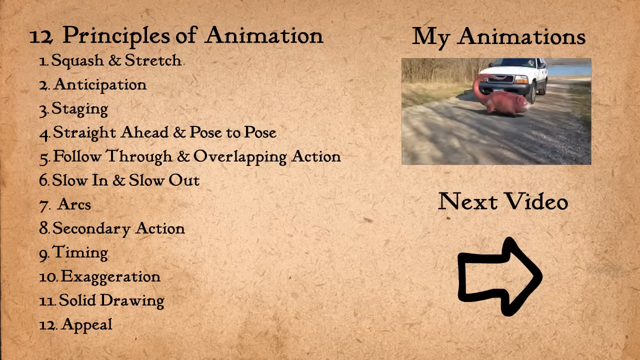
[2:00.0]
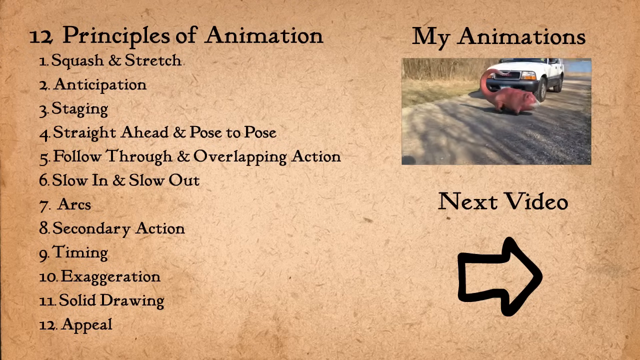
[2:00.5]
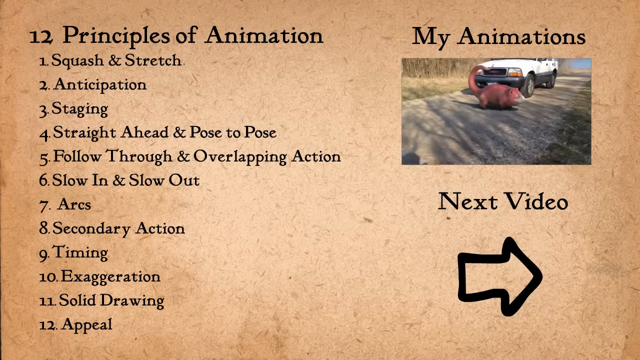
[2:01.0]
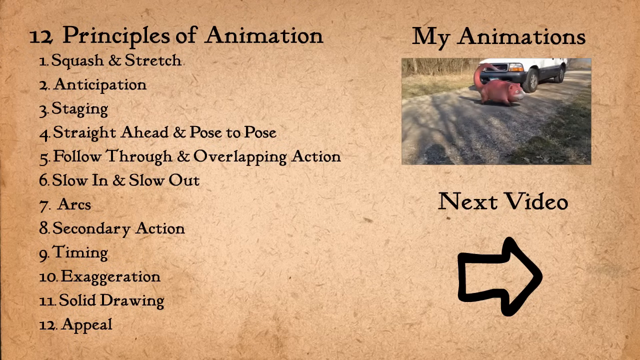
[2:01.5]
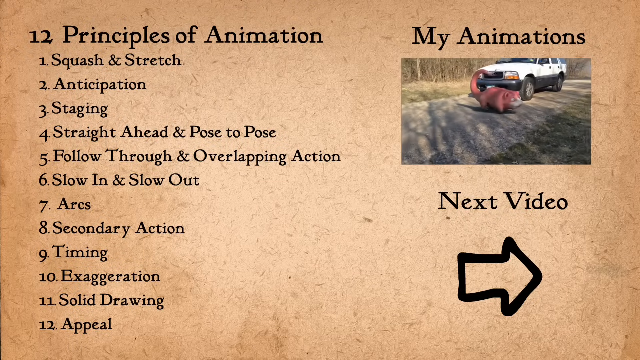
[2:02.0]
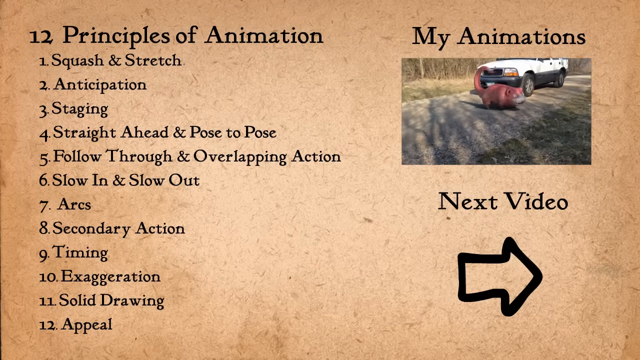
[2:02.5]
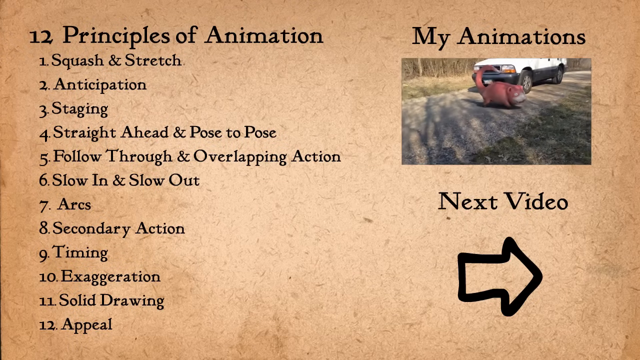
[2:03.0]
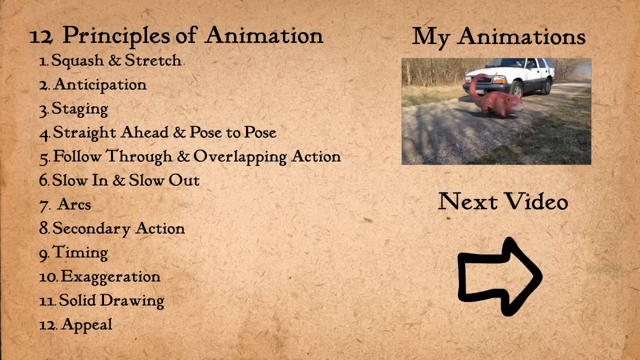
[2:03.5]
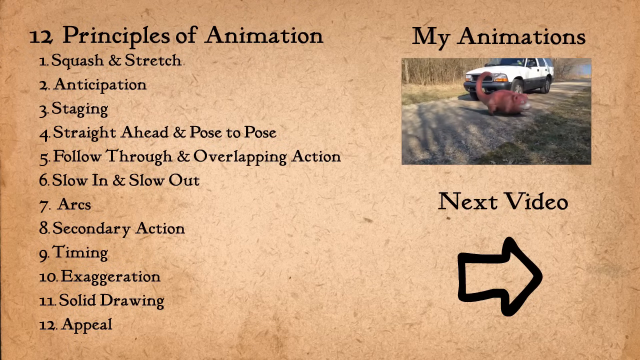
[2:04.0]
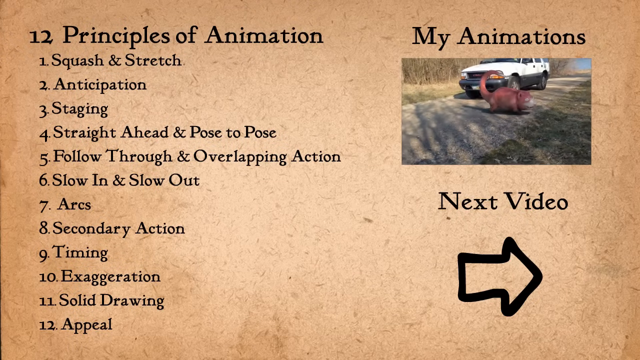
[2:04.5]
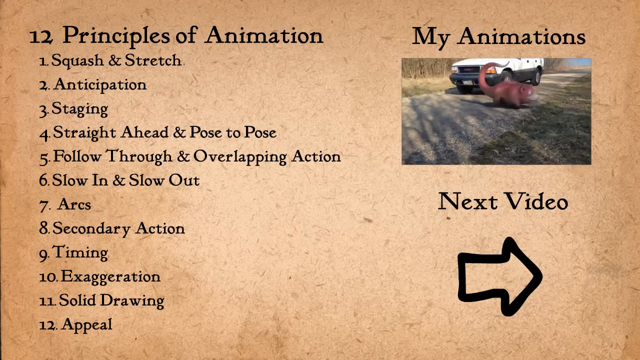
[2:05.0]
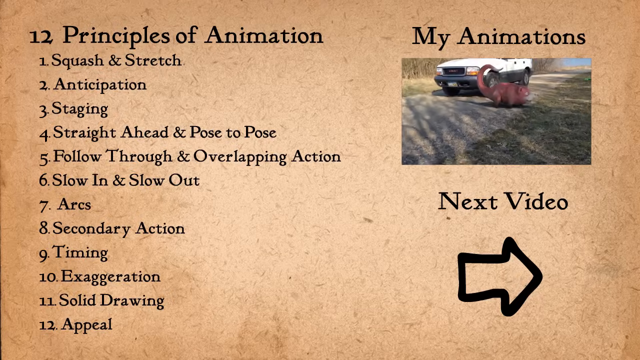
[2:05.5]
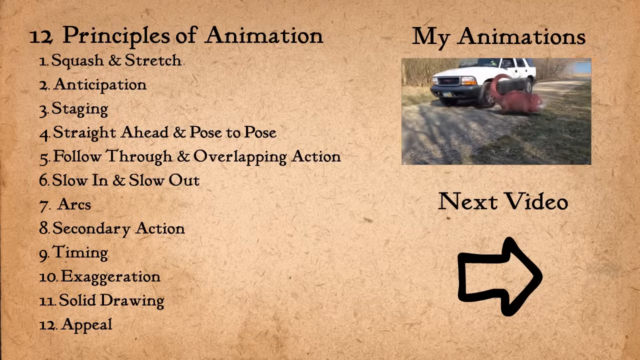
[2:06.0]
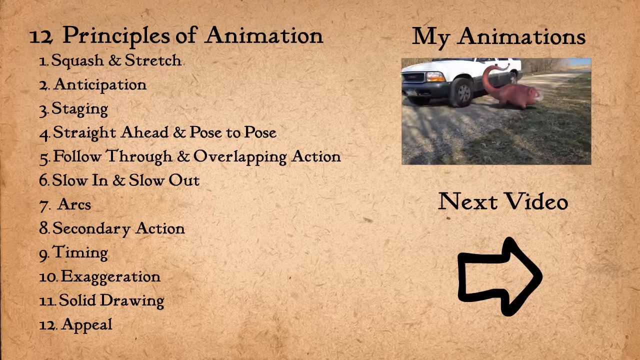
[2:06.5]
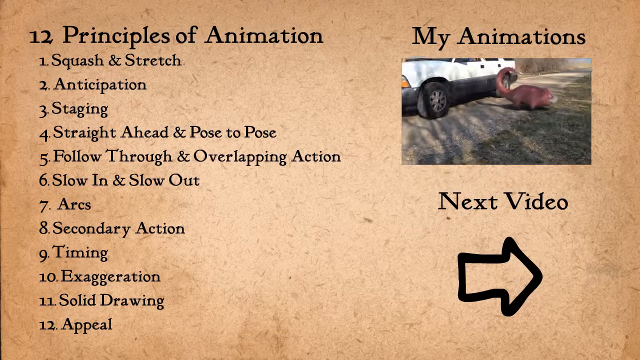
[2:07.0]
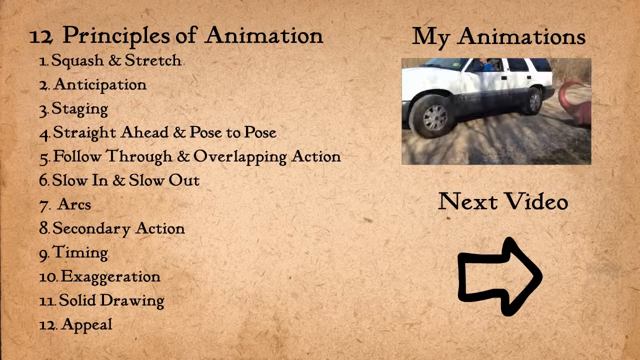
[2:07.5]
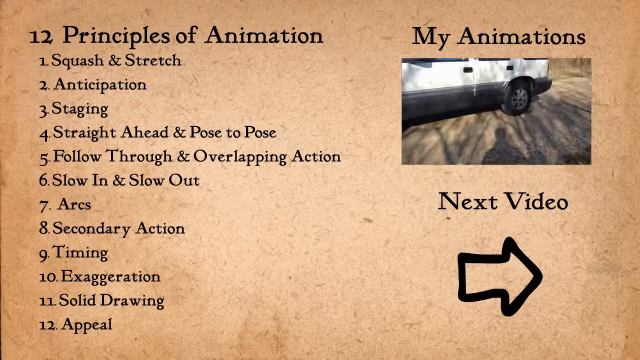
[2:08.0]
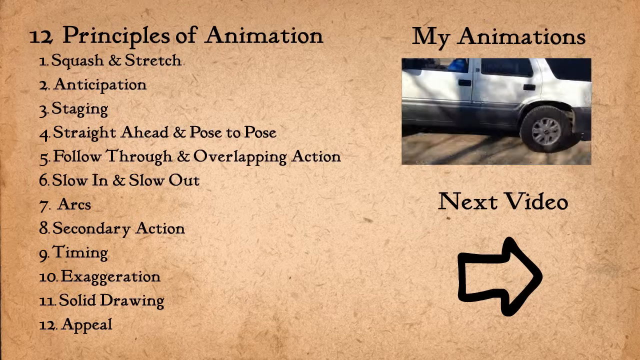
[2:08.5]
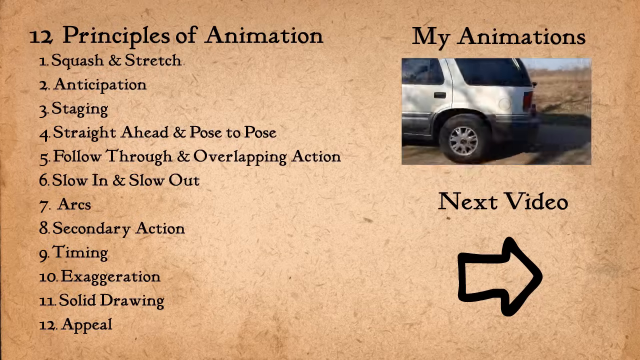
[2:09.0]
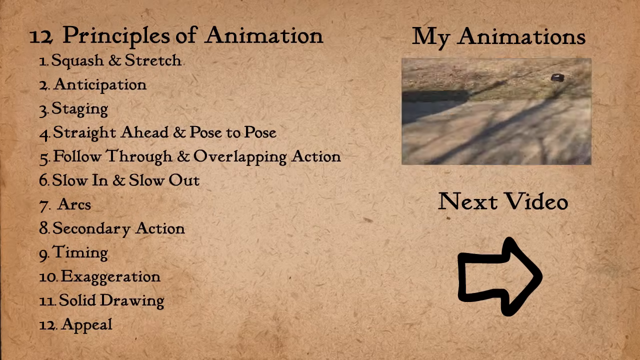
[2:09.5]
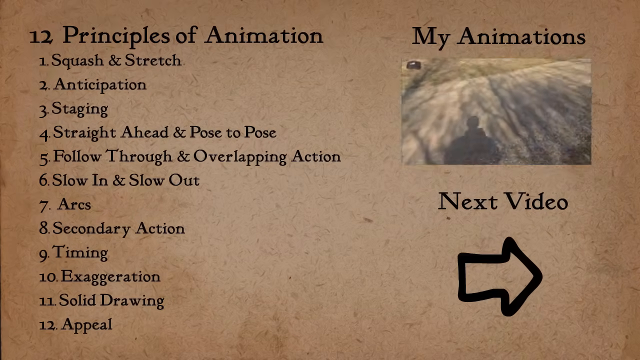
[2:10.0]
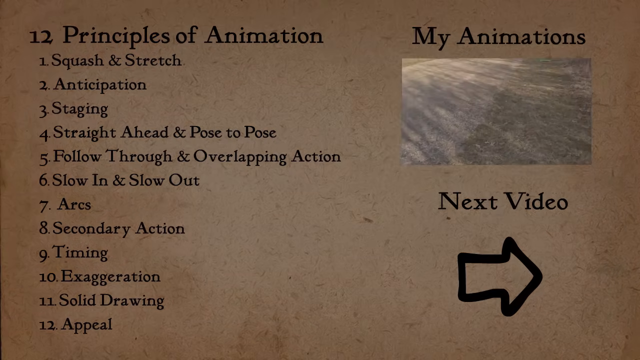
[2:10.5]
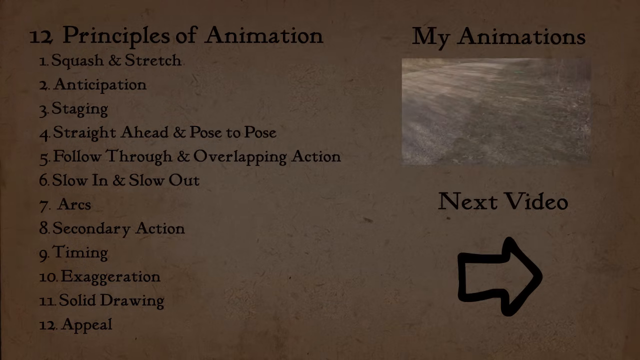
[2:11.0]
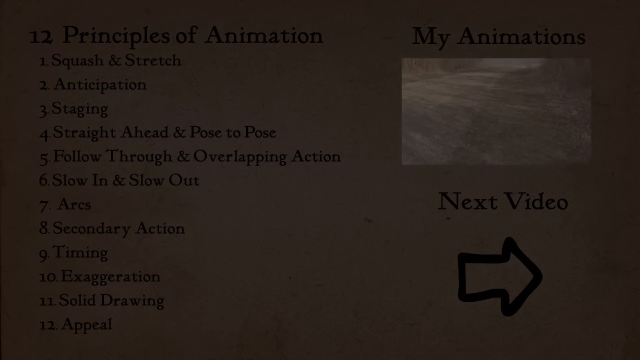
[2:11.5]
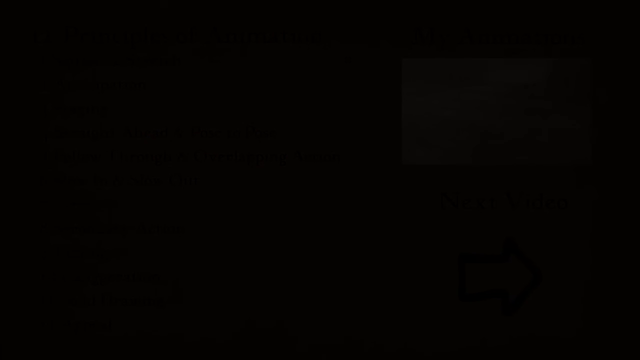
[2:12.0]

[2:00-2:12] At the end of the video, the twelve principles of animation are listed from top to bottom: "squash and stretch," "anticipation," "staging," "straight ahead and pose to pose," "follow through and overlapping action," "slow in and slow out," "art," "secondary action," "timing," "exaggeration," "solid drawing" and "appeal."